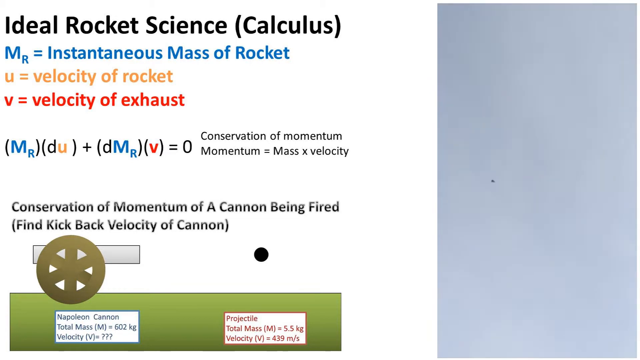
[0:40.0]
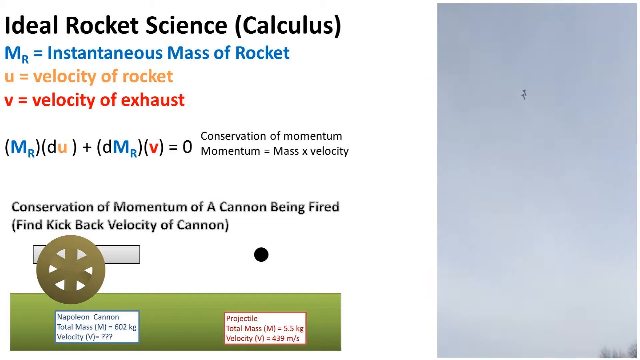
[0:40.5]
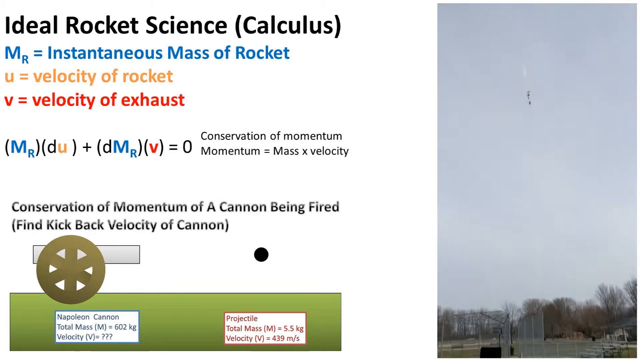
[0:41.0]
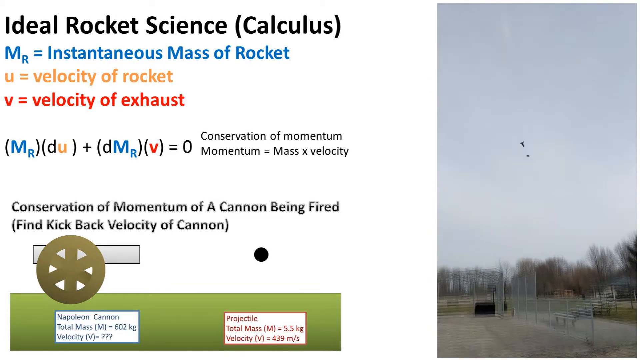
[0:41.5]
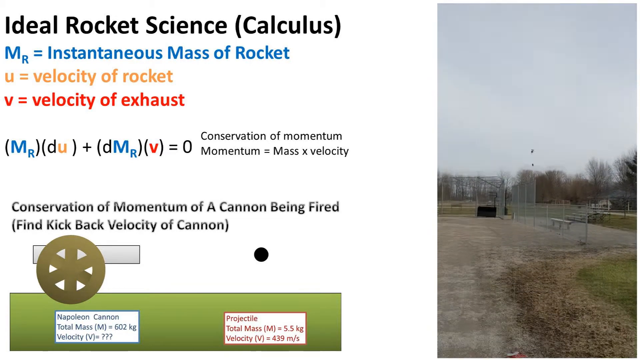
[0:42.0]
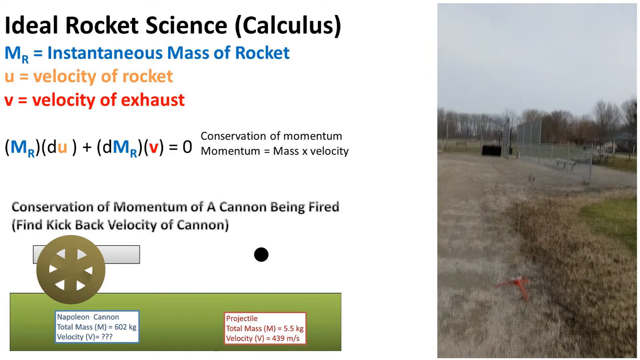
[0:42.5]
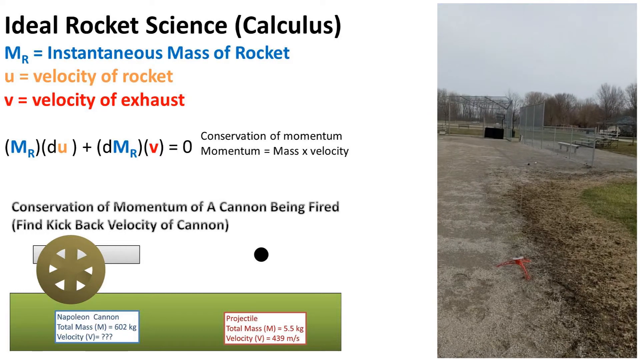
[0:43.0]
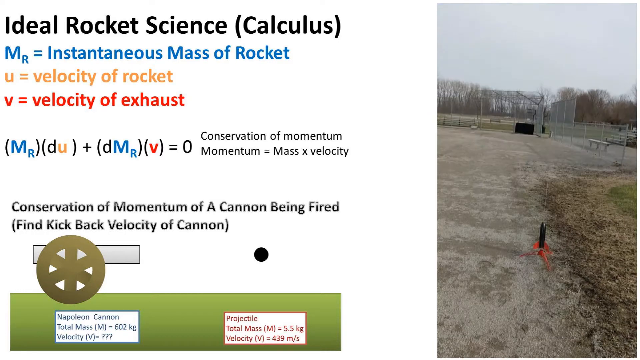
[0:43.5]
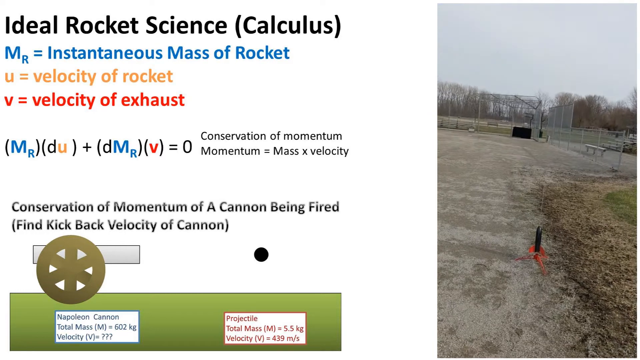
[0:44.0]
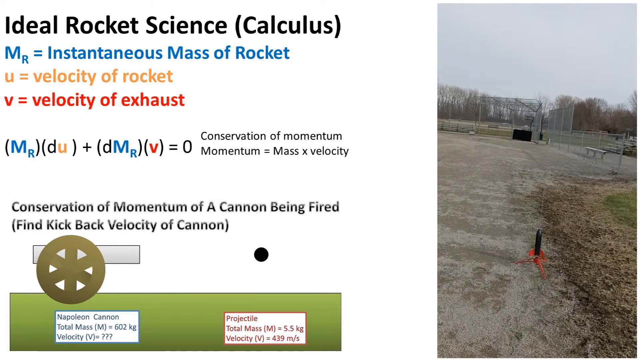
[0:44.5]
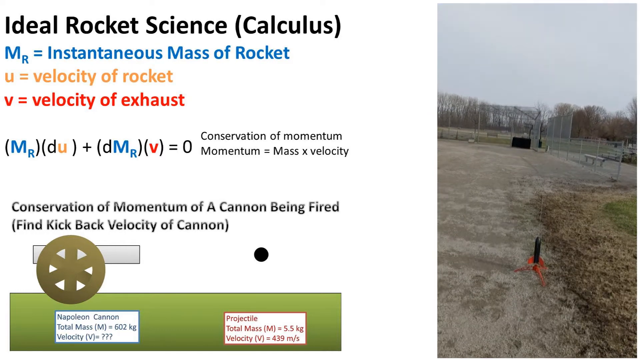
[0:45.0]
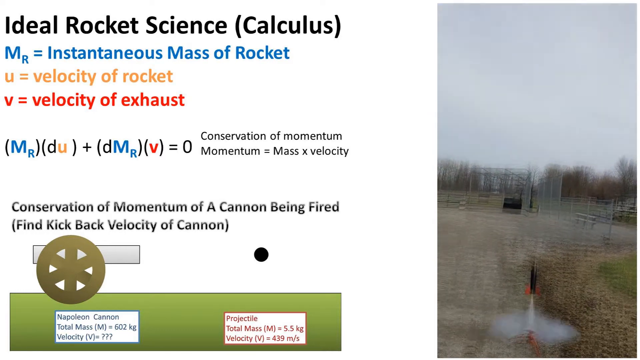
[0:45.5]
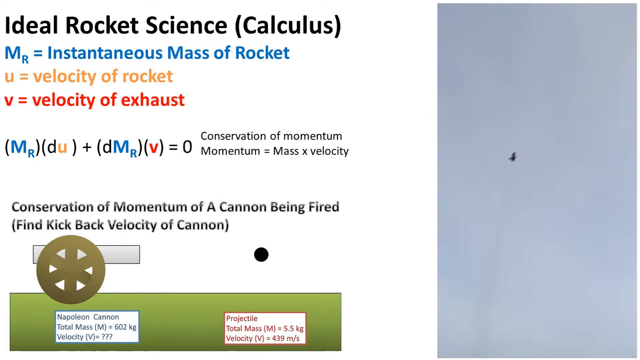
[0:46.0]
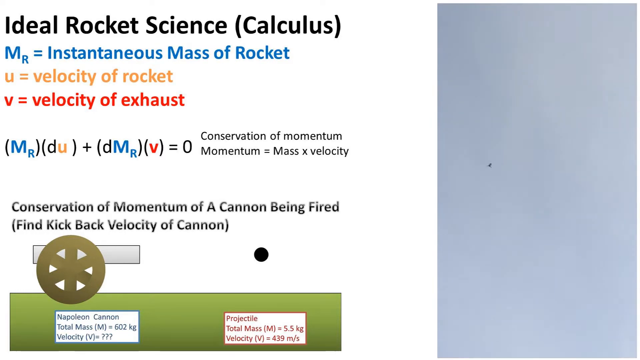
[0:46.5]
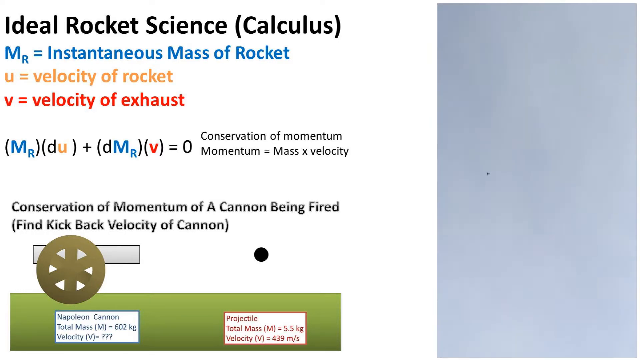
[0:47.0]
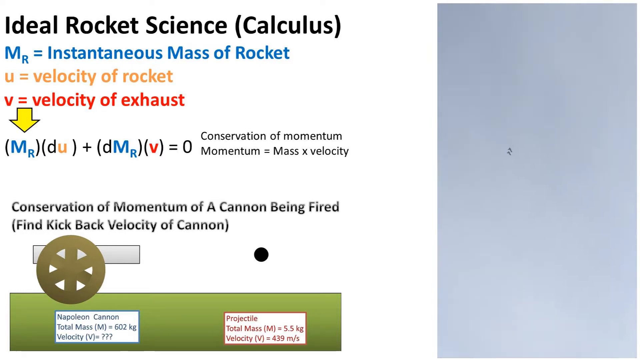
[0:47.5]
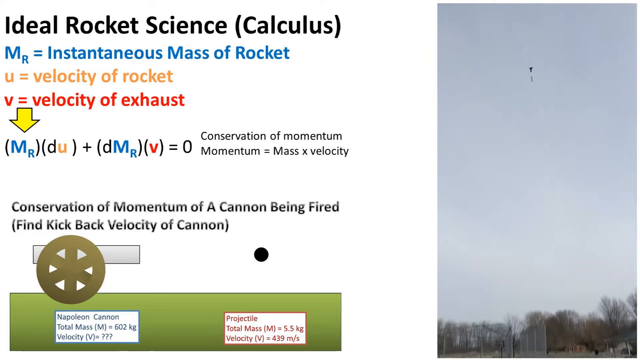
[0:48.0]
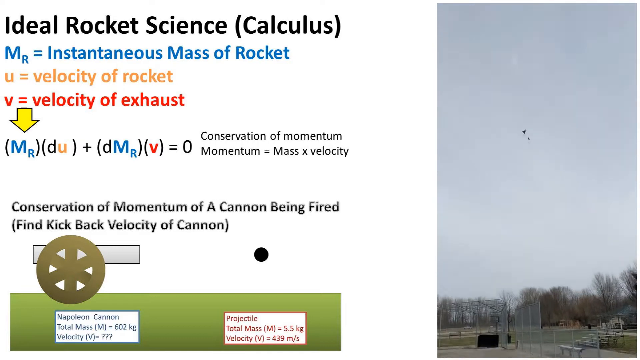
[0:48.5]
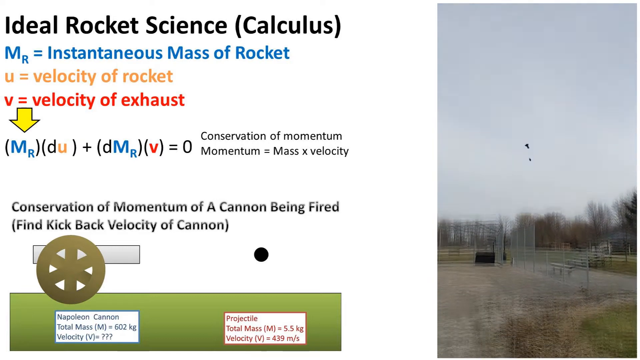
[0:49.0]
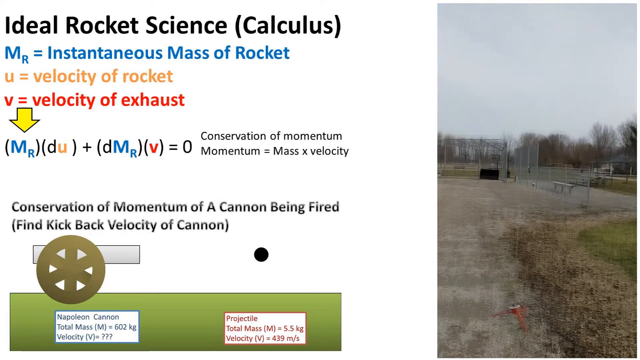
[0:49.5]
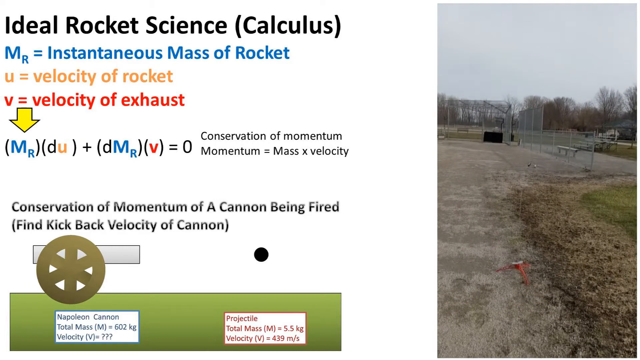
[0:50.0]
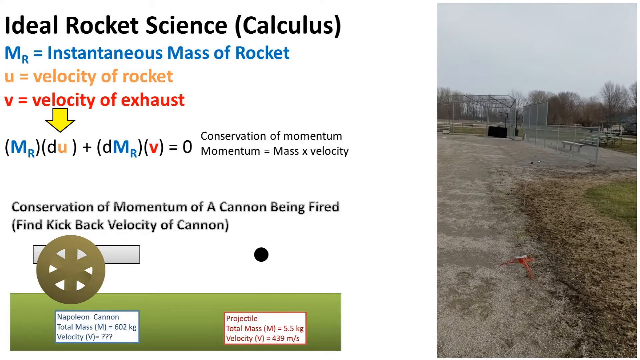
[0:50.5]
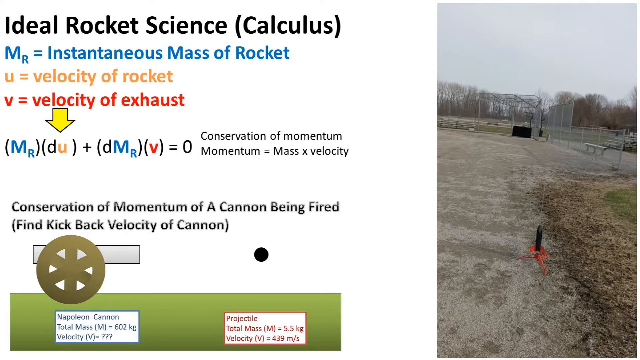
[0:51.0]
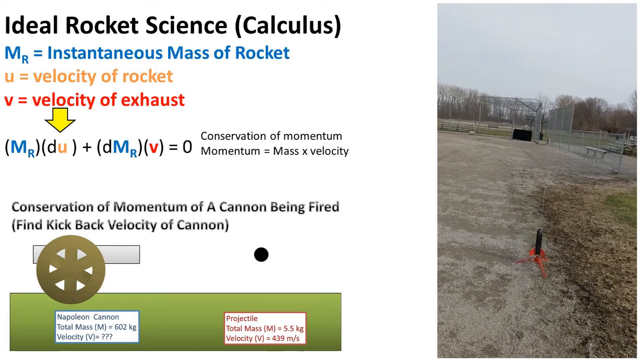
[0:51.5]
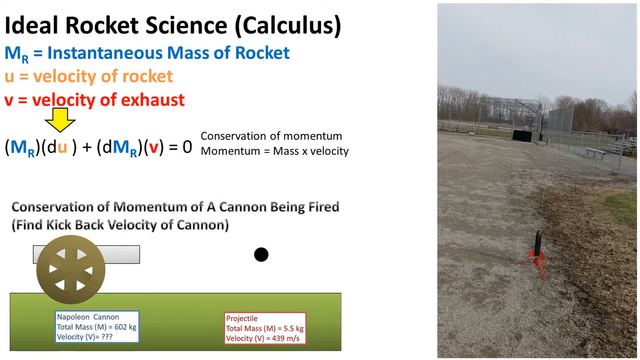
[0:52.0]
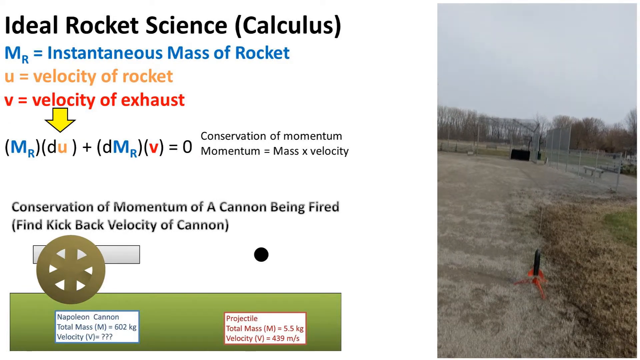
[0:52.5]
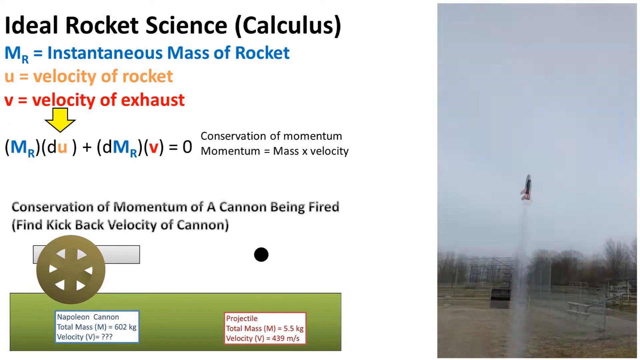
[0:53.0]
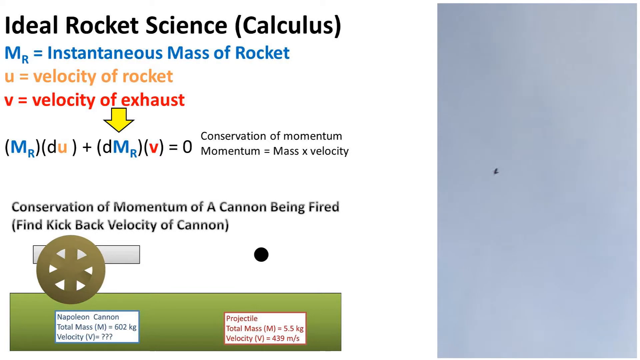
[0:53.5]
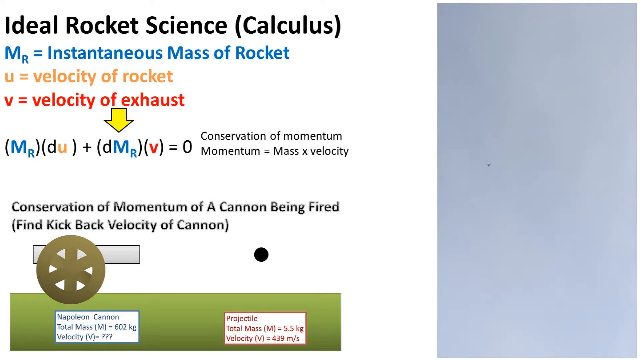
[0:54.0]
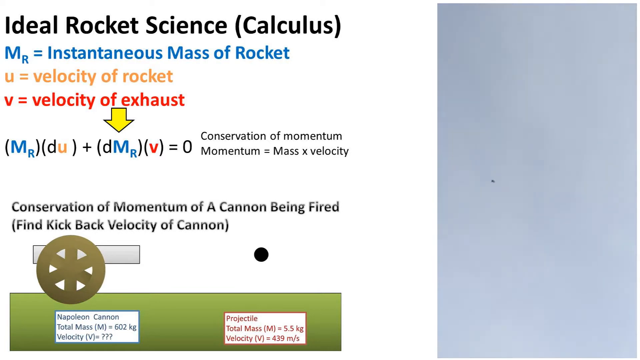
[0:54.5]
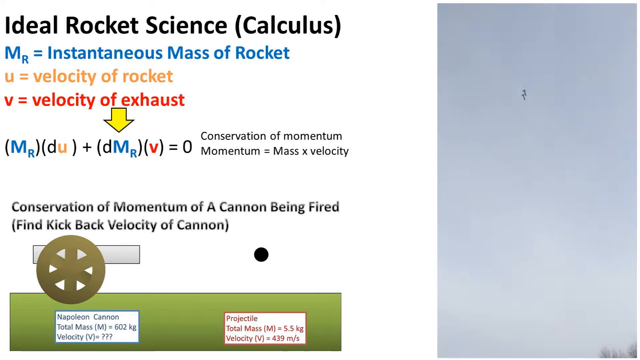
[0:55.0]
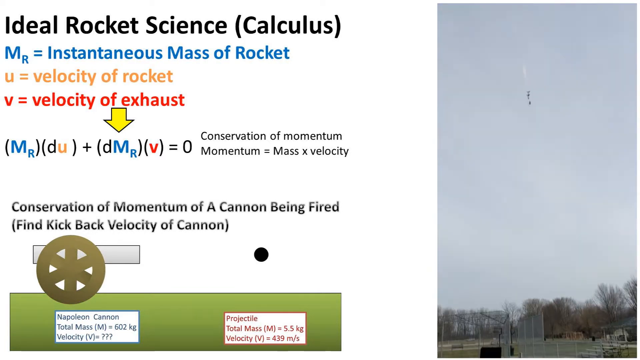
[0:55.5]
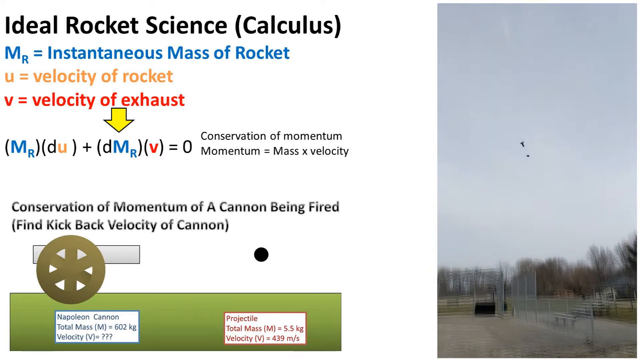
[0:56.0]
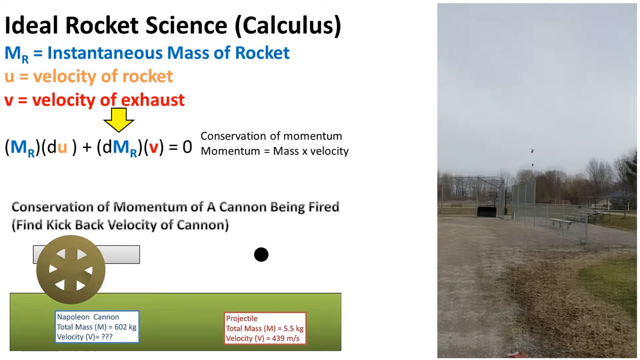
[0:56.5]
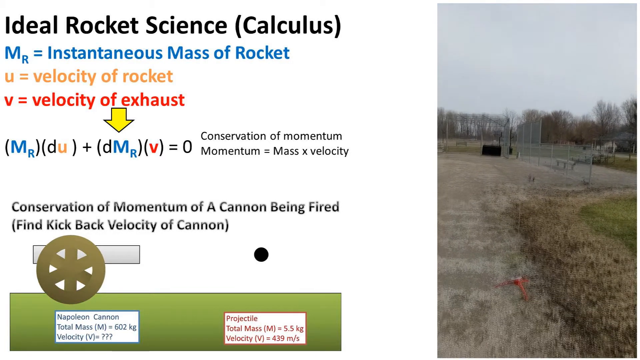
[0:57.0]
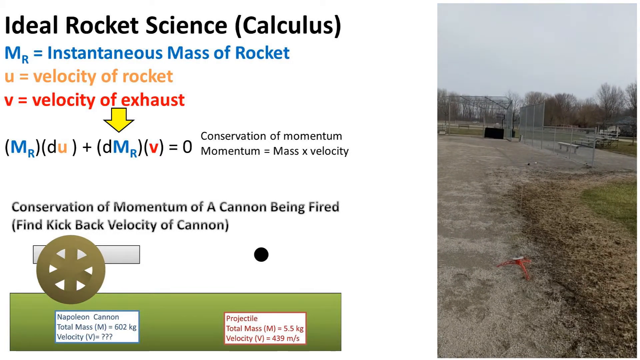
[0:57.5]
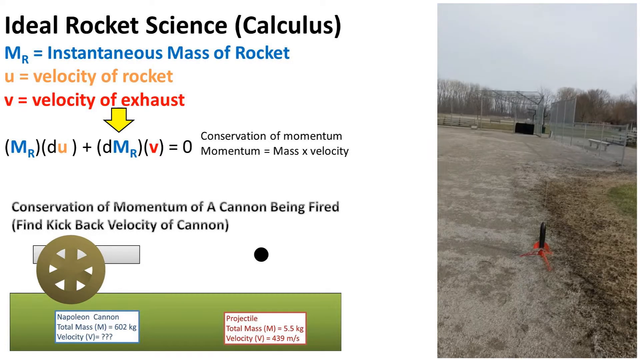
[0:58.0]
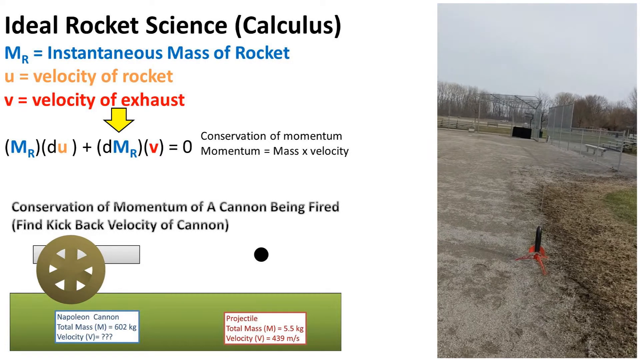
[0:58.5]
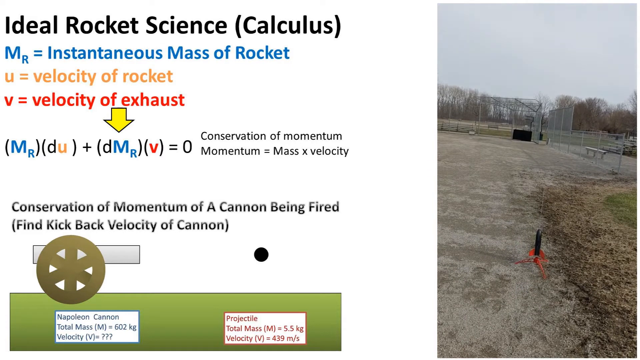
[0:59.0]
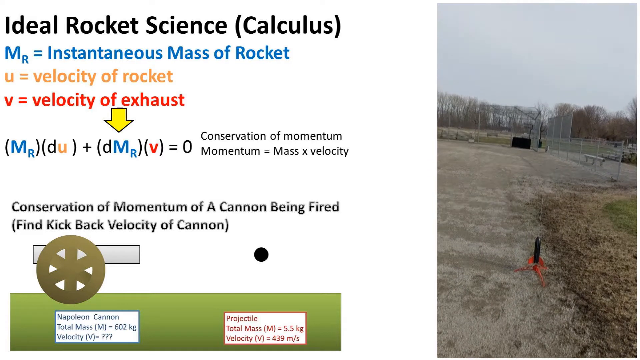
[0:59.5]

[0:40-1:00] The video runs through each portion of the conservation of momentum equation. On the right side of the screen is a looping video of a rocket flying in the air. At the top left are three variables: the mass of a rocket, the velocity of a rocket, and the velocity of exhaust. A yellow arrow with a black outline points out each section of the equation in turn: first the mass of the rocket, then the velocity of the rocket multiplied with it, then the mass of the rocket again, and finally the velocity of exhaust, which it is multiplied by. At the bottom of the screen is information for calculating the momentum of a cannon being fired, giving the projectile mass and velocity, so that the kickback velocity of the cannon can be calculated using the equation above.